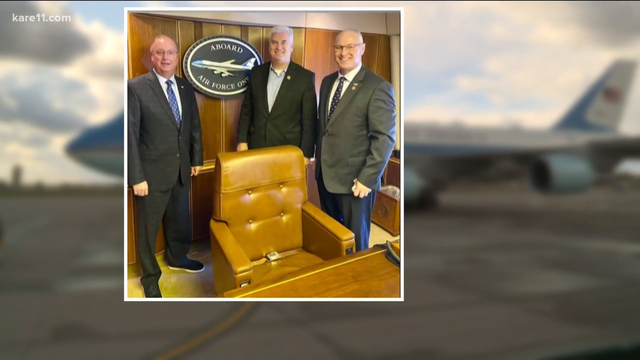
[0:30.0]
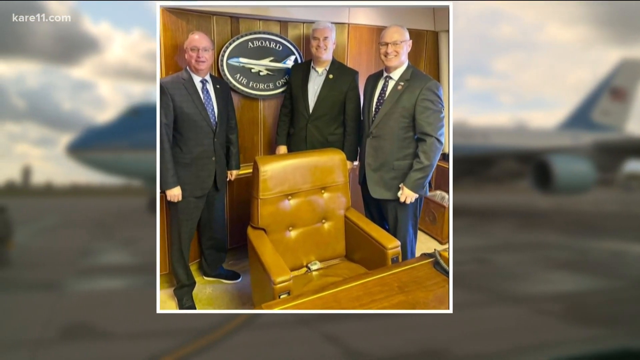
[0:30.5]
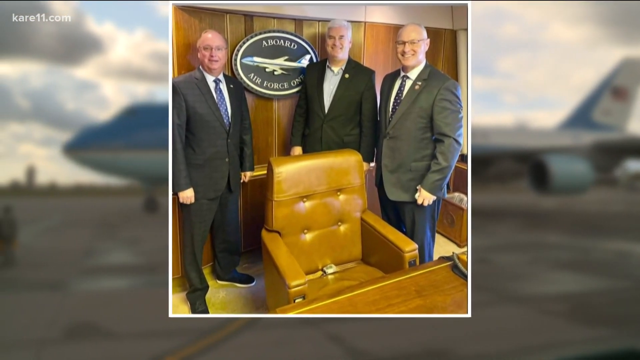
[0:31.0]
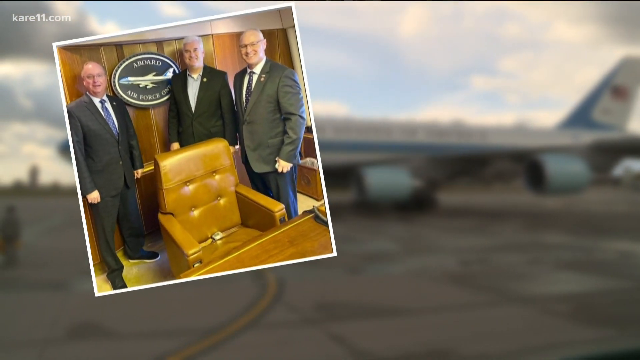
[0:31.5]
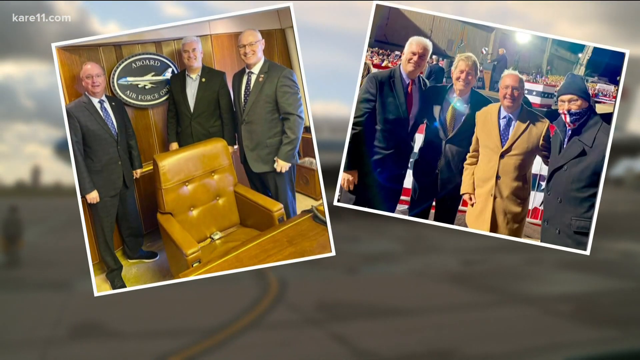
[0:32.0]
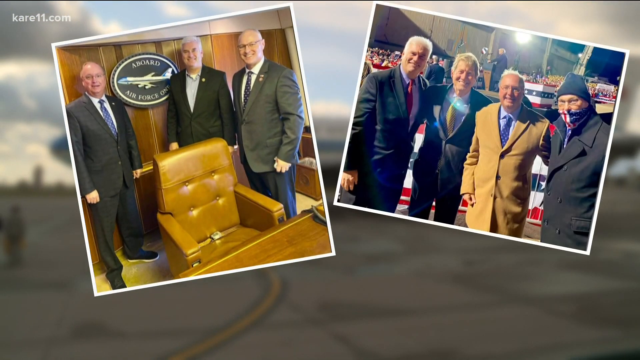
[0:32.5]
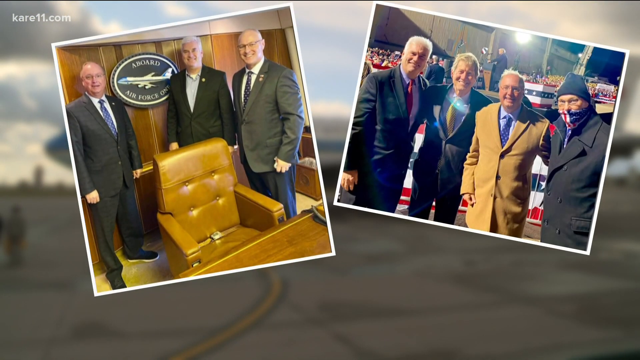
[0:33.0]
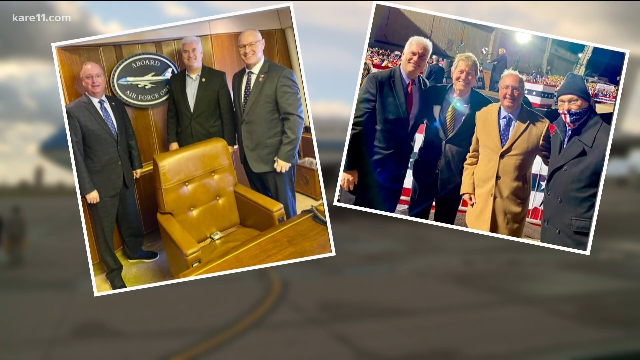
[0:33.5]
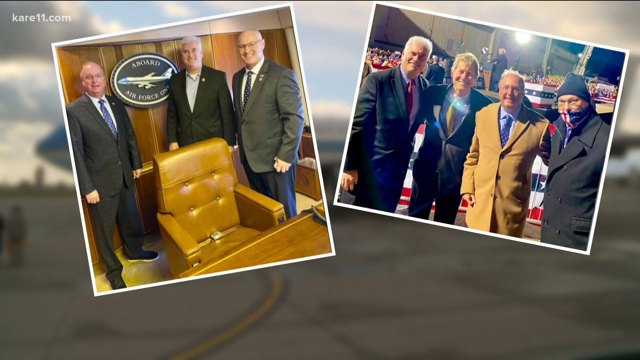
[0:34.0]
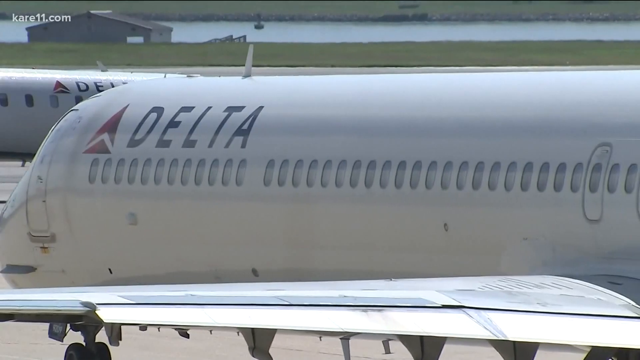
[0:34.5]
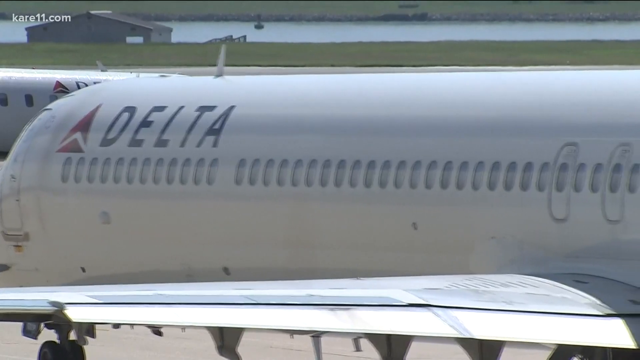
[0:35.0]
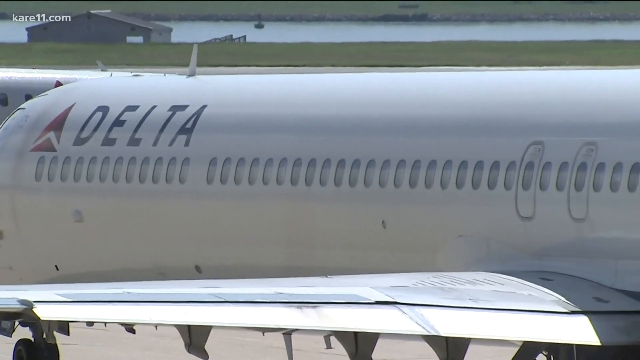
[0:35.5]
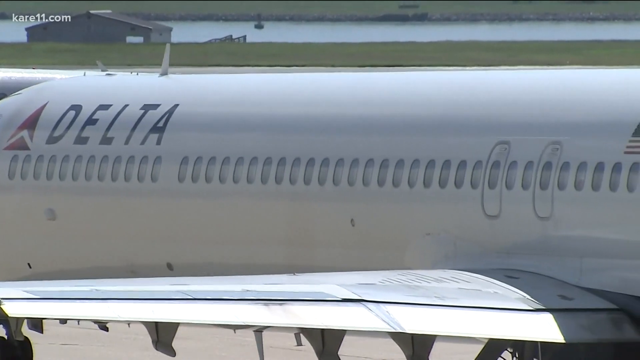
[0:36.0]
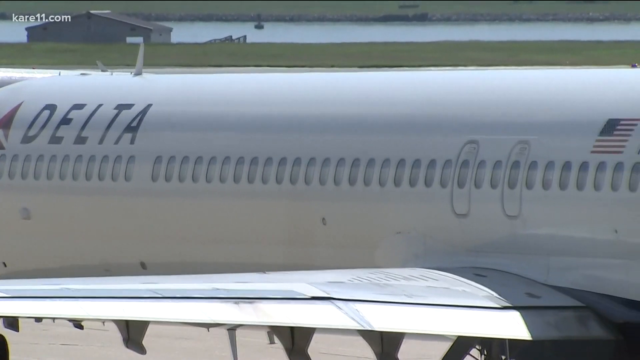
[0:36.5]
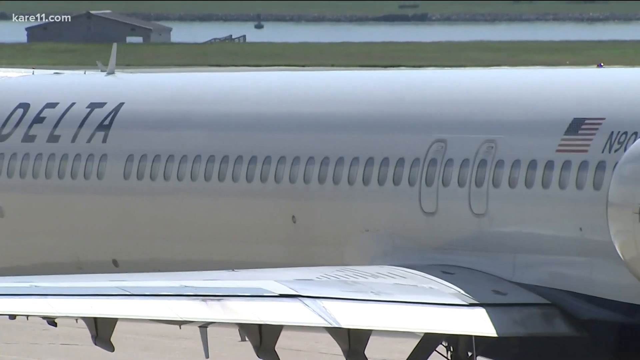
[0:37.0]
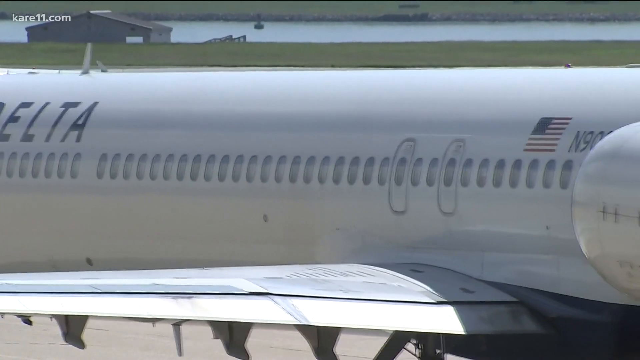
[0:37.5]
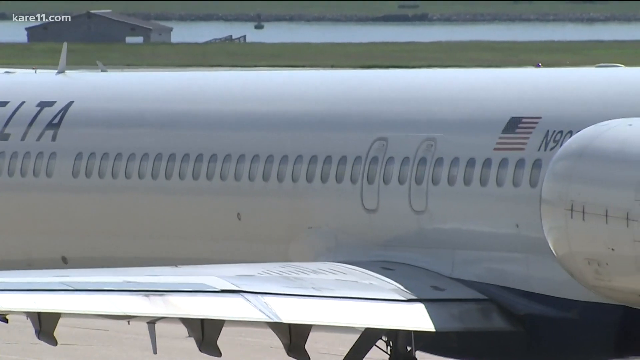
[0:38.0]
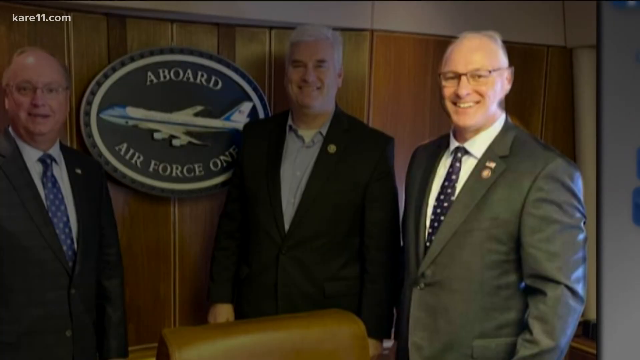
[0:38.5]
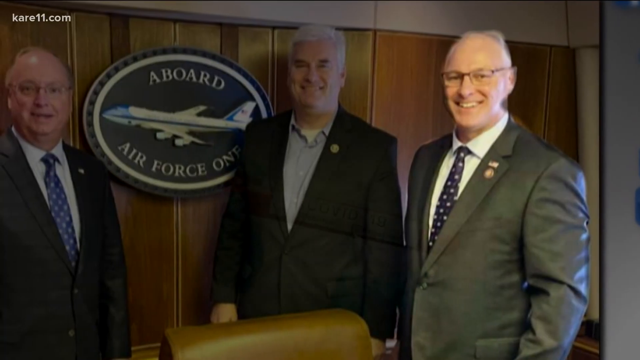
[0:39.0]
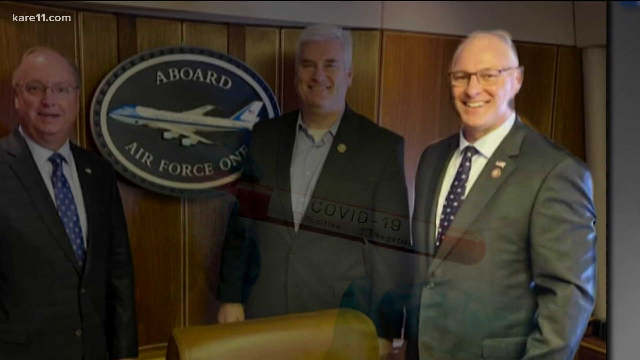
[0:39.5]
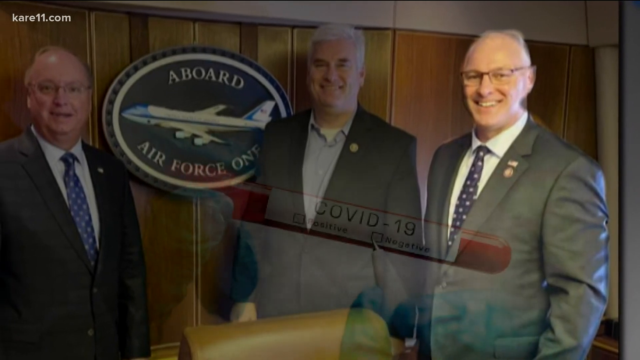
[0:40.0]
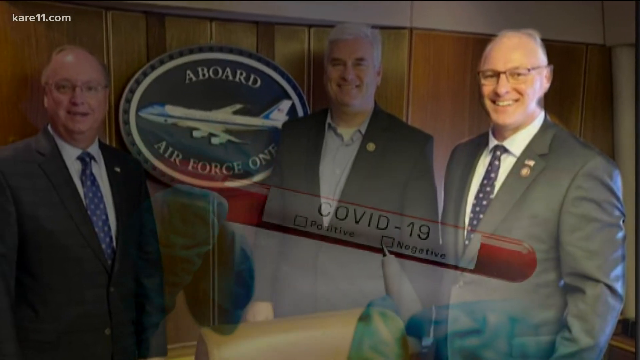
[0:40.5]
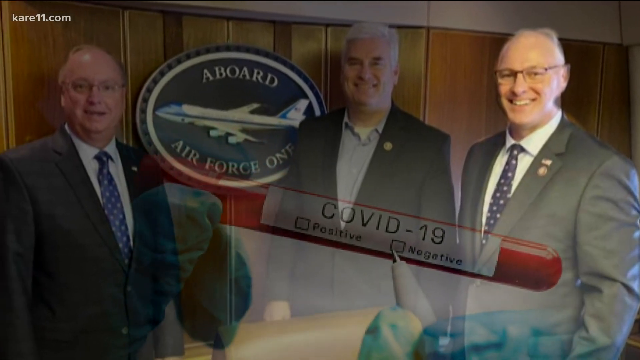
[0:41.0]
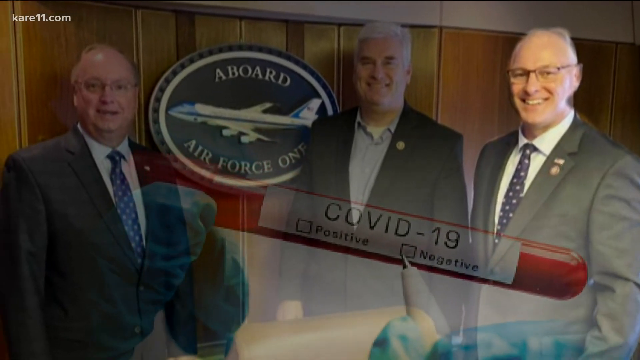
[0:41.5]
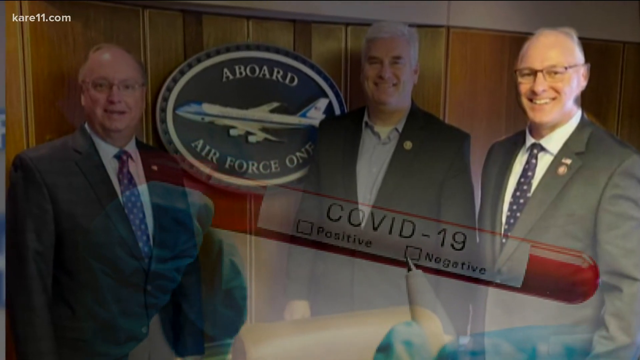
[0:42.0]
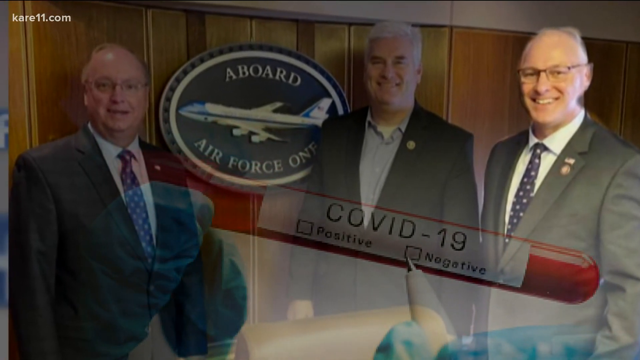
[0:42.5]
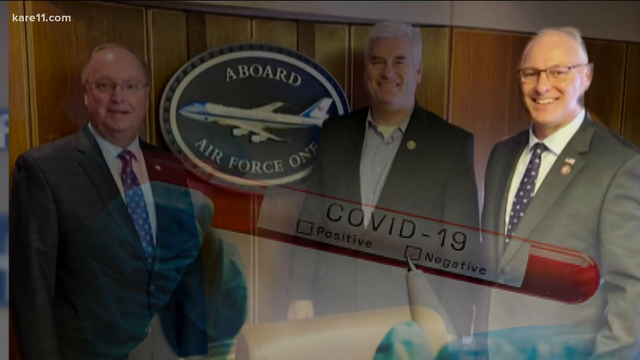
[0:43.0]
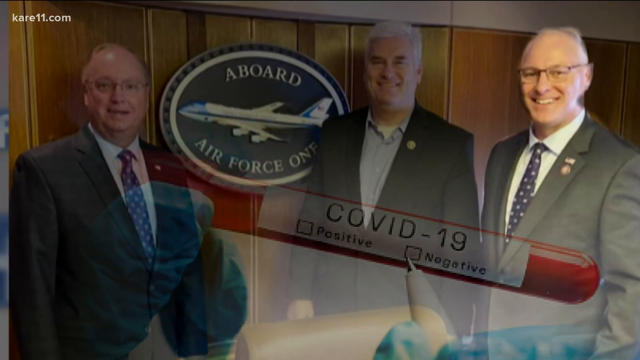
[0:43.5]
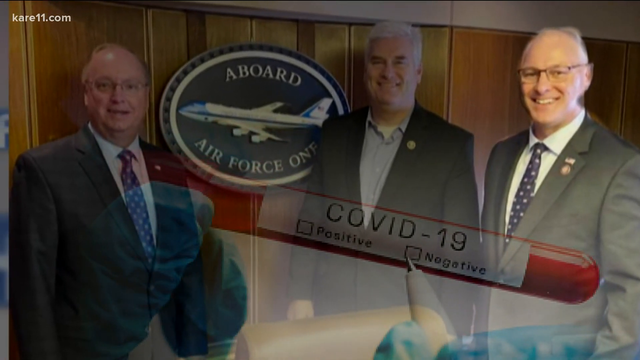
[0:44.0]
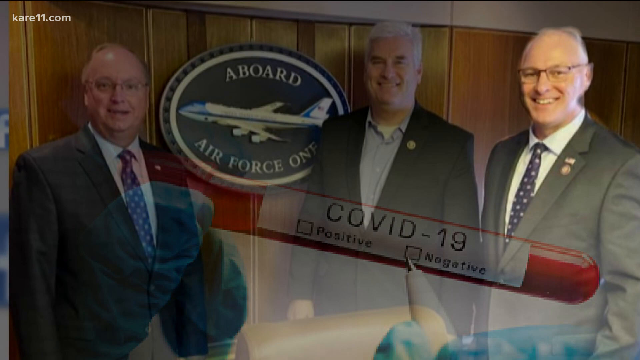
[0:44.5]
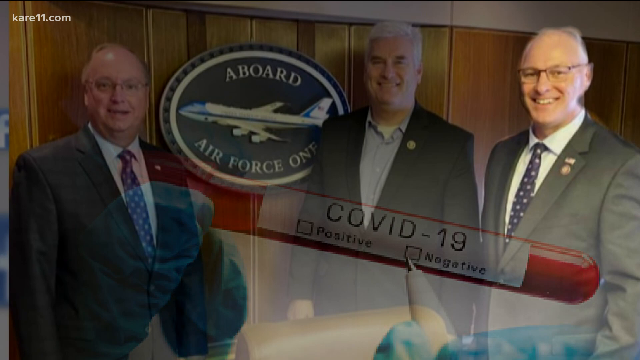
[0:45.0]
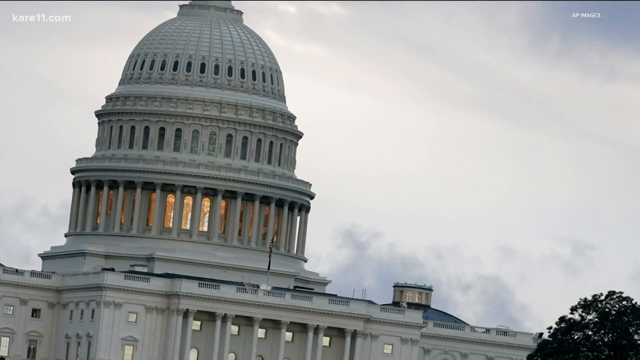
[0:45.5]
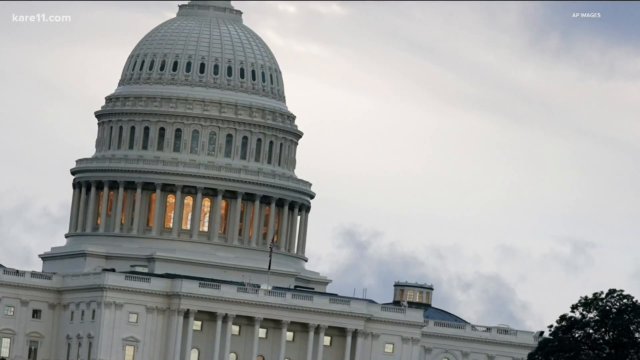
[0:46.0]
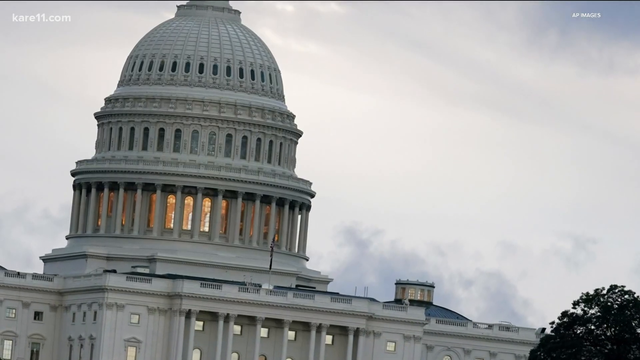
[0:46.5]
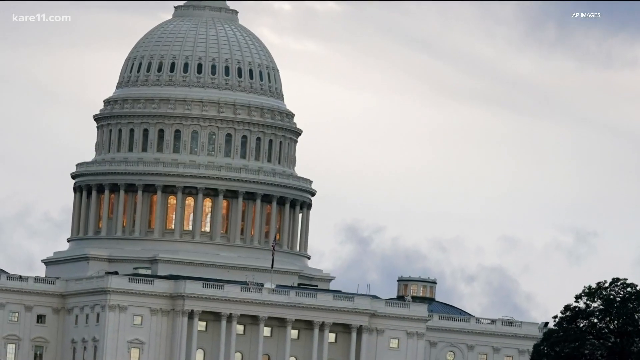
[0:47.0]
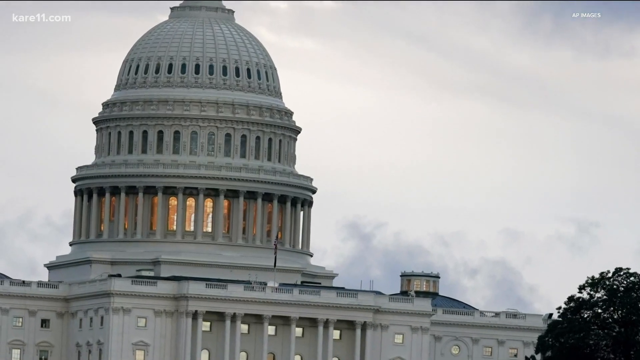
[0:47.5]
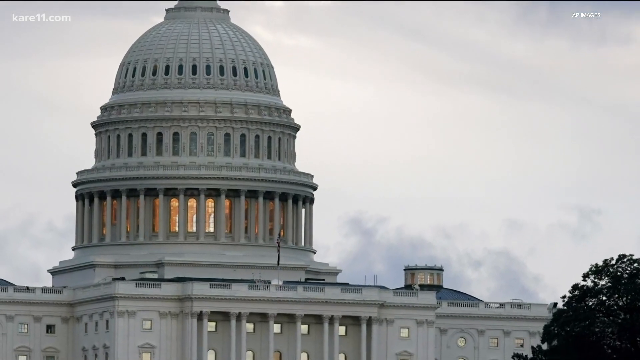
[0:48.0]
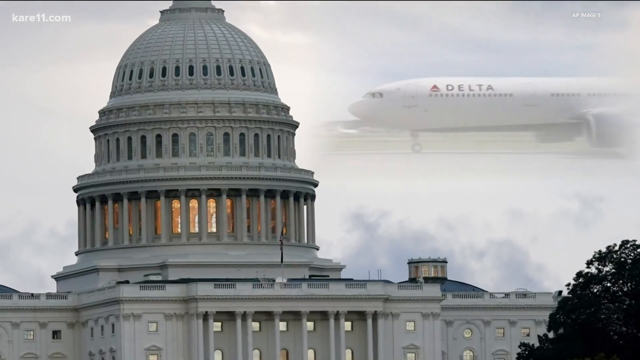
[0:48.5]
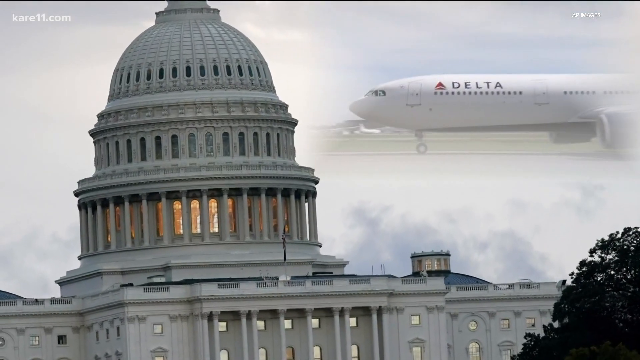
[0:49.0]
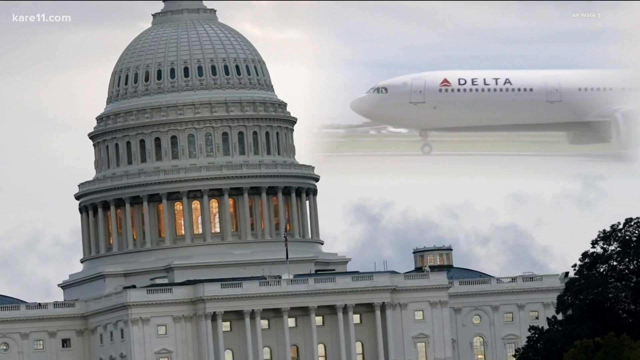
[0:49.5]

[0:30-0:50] Individuals pose for a picture. On the left side the "Air Force One" symbol is prominently shown, along with a board or signage behind a desk that may be the presidential desk aboard Air Force One. On the right side, four individuals are taking a picture, shown against a blurred background. A Delta airplane slowly leaves along a tarmac. Next, an intertwined vial appears with the text "COVID" and two squares, "positive" and "negative", blurred over the "Air Force One" caption, which now fills the entire screen. A tilted Capitol image then tilts the other way, with the airplane featured in the top right corner.